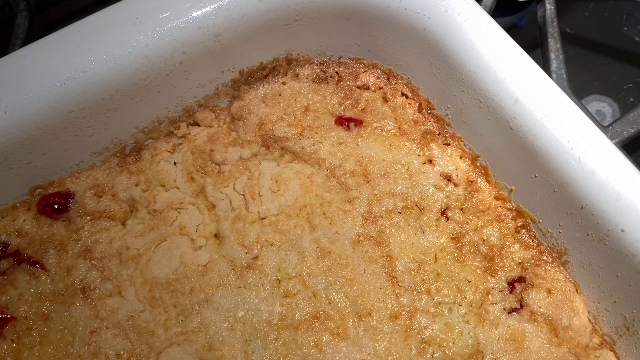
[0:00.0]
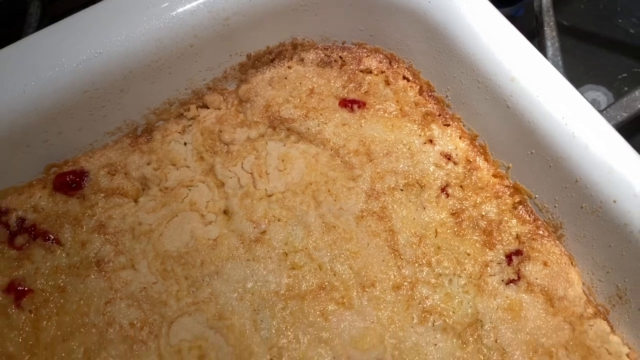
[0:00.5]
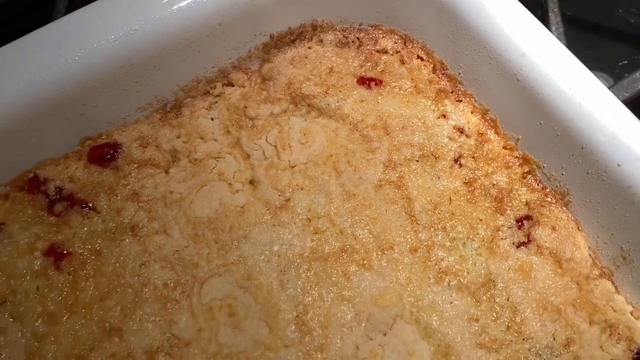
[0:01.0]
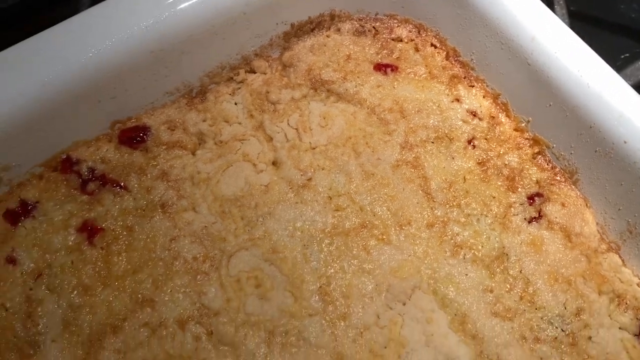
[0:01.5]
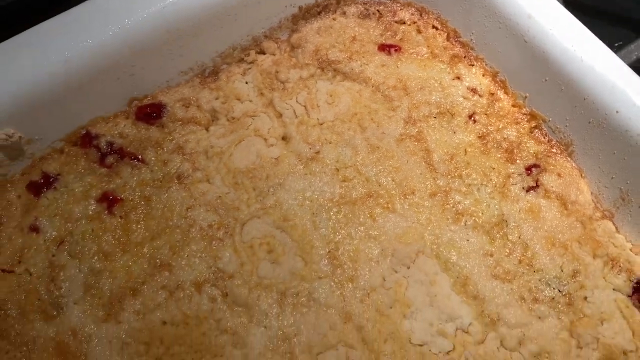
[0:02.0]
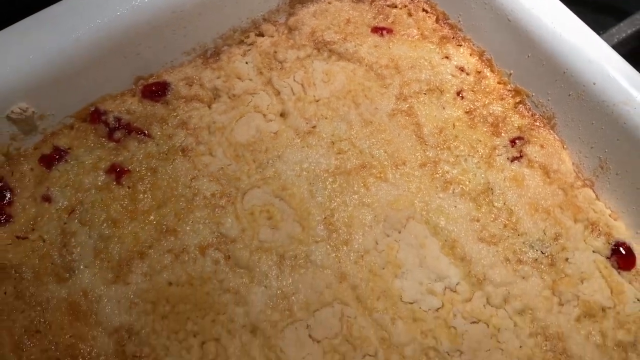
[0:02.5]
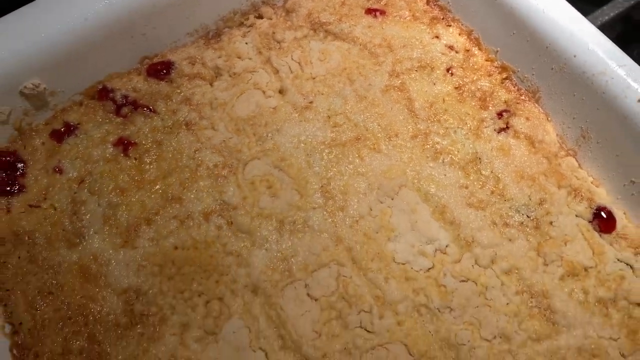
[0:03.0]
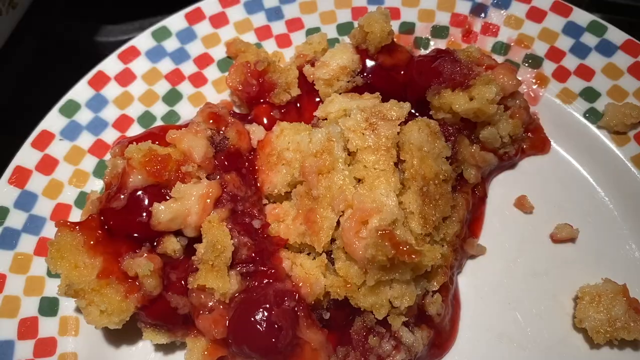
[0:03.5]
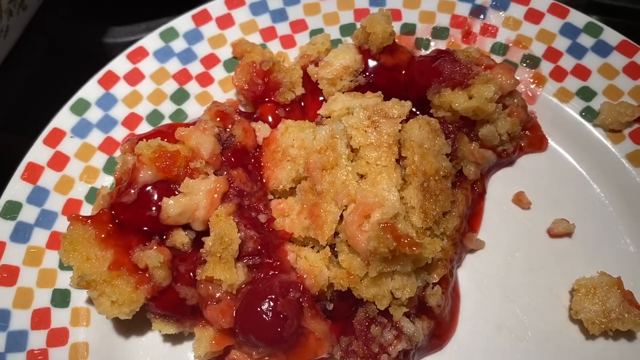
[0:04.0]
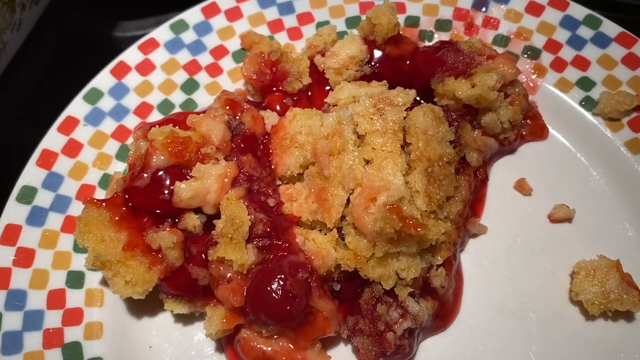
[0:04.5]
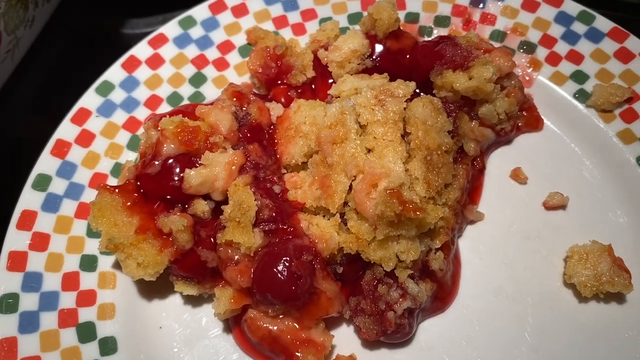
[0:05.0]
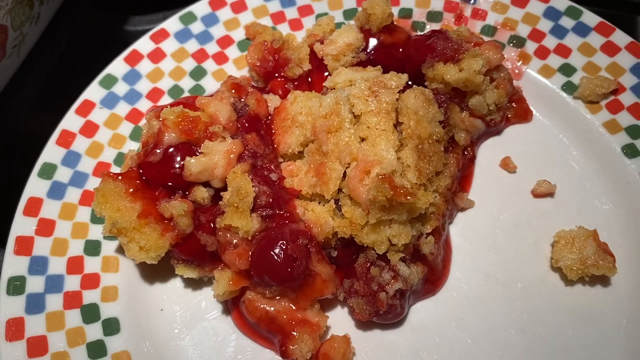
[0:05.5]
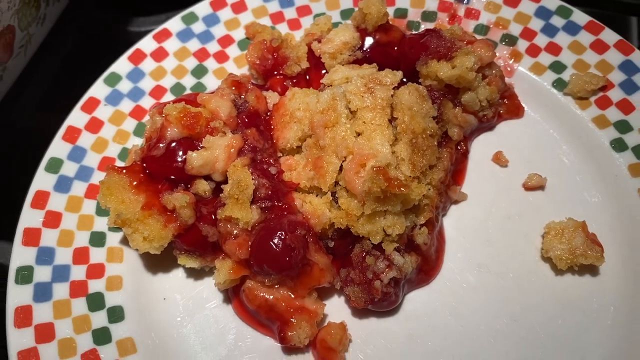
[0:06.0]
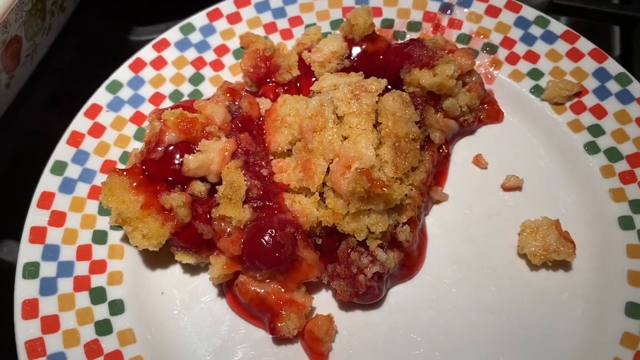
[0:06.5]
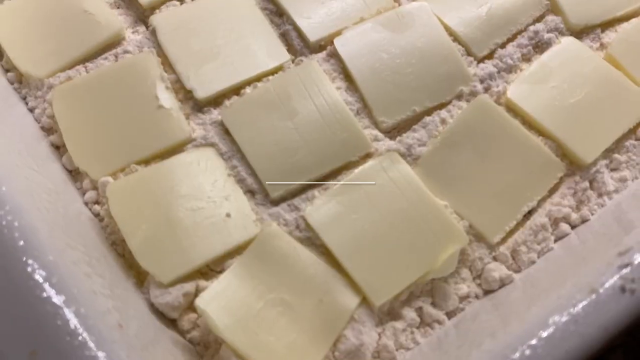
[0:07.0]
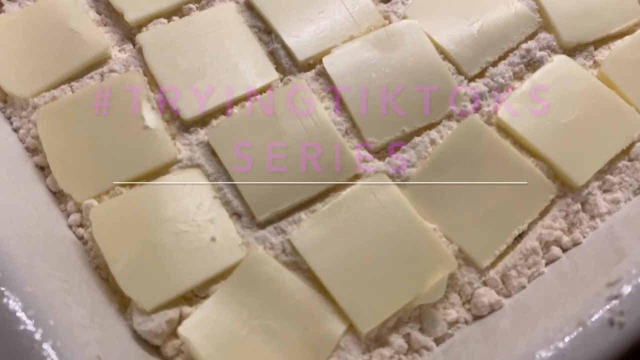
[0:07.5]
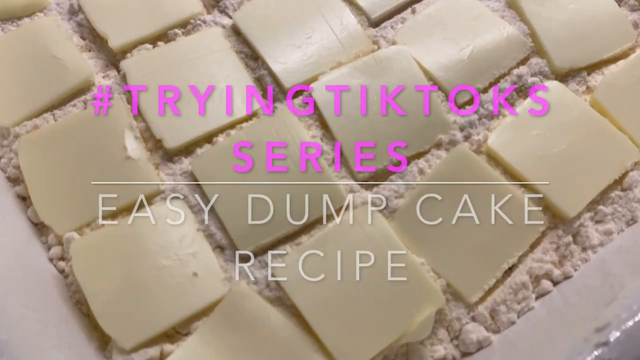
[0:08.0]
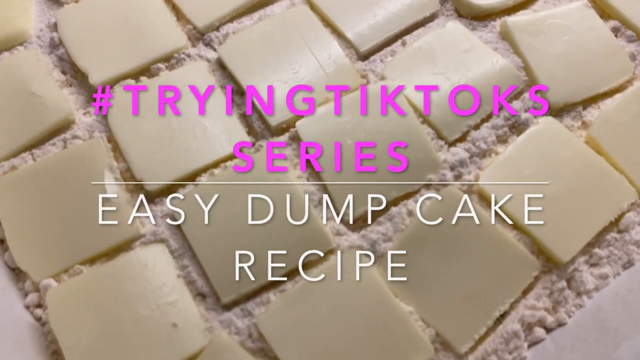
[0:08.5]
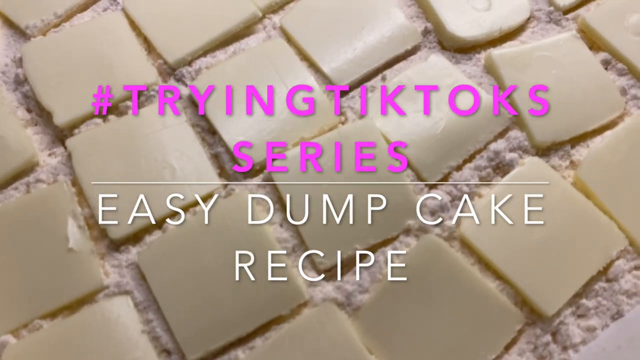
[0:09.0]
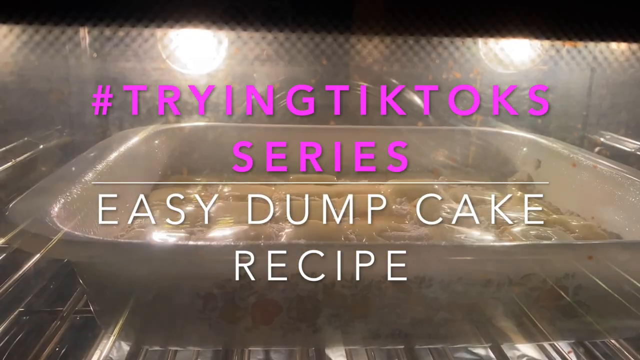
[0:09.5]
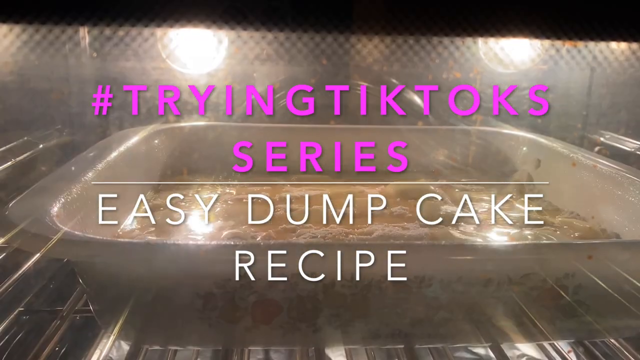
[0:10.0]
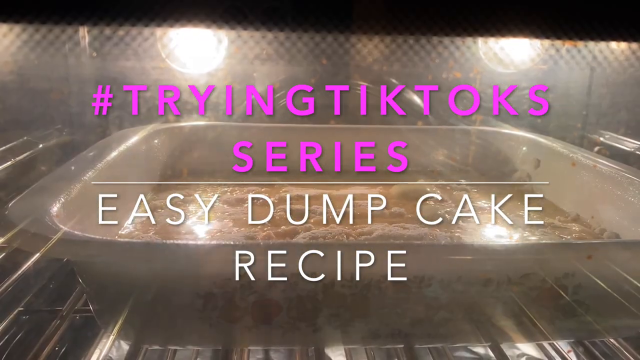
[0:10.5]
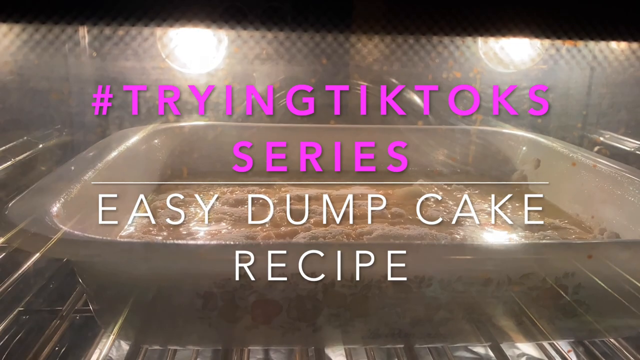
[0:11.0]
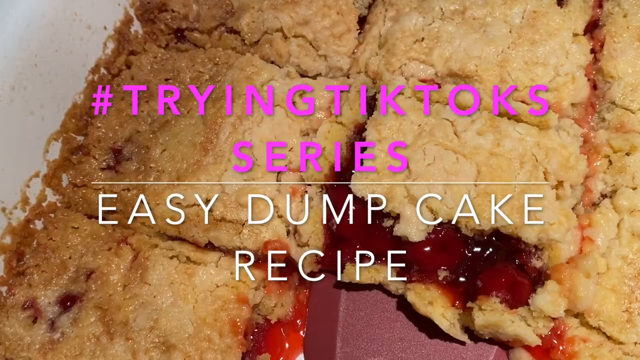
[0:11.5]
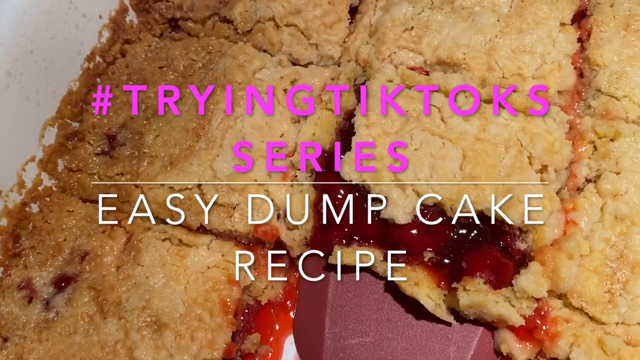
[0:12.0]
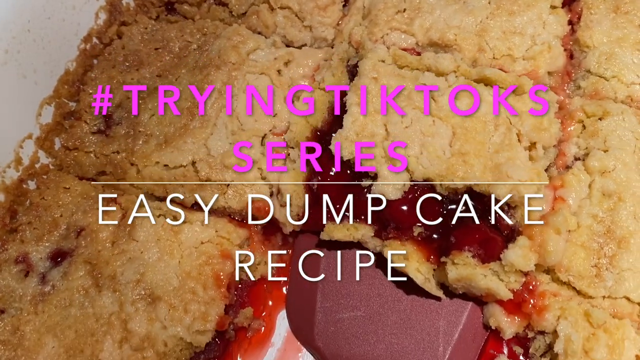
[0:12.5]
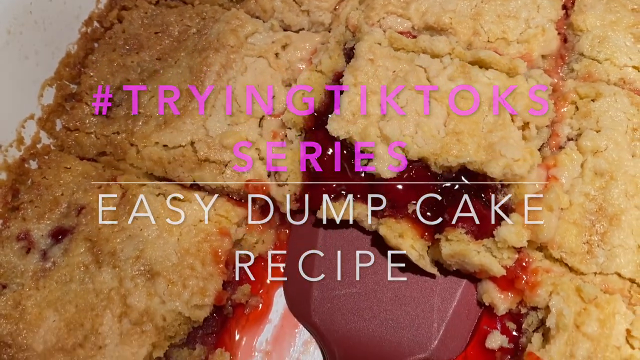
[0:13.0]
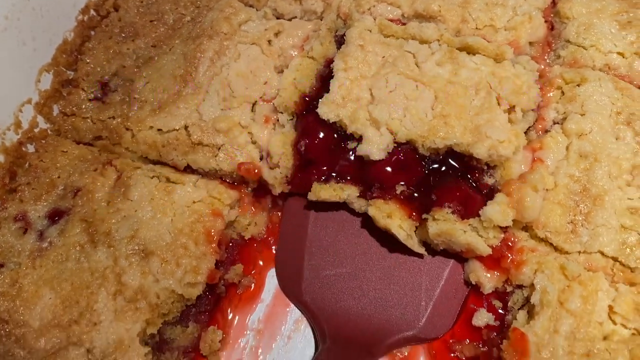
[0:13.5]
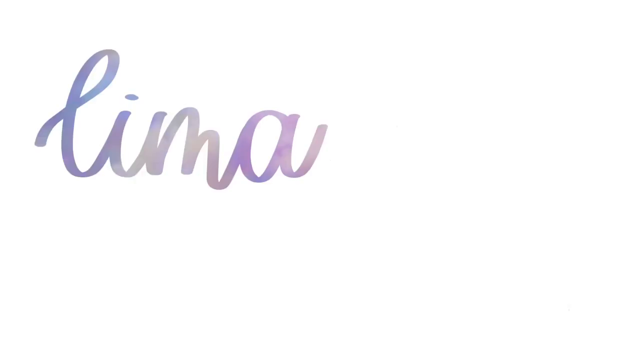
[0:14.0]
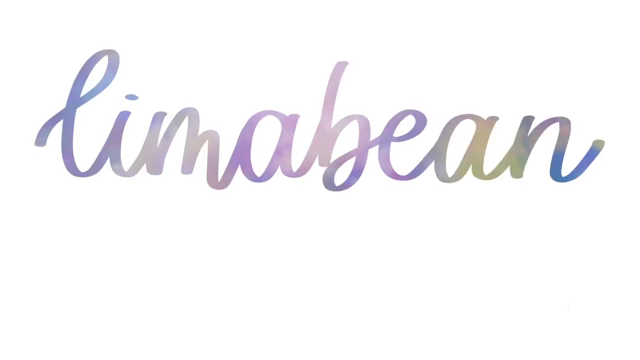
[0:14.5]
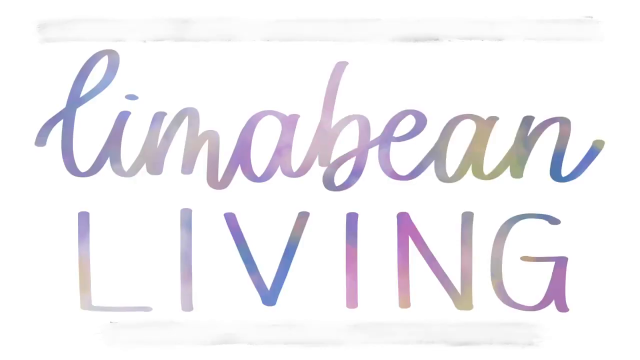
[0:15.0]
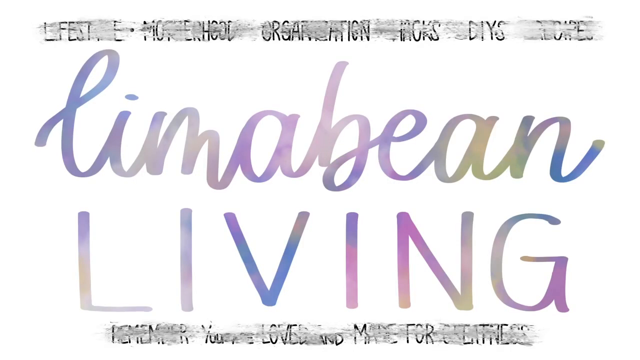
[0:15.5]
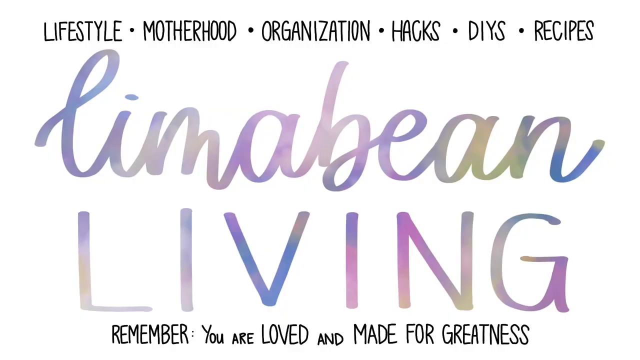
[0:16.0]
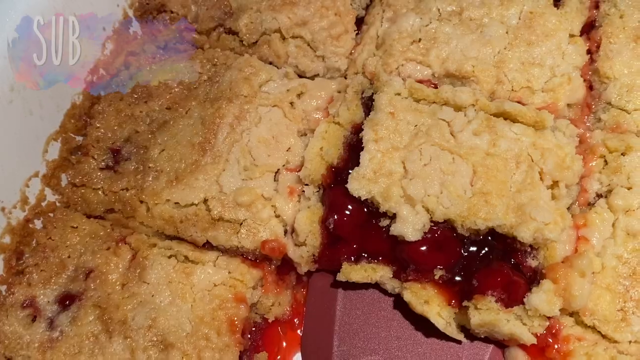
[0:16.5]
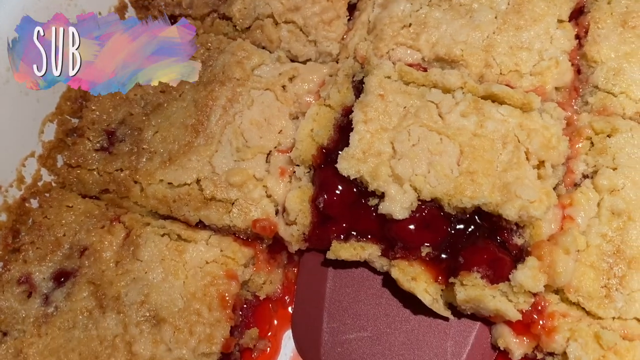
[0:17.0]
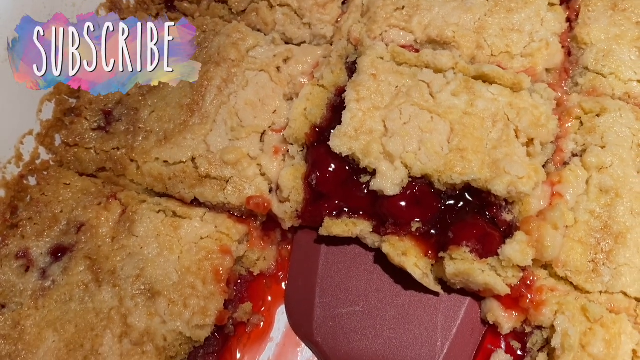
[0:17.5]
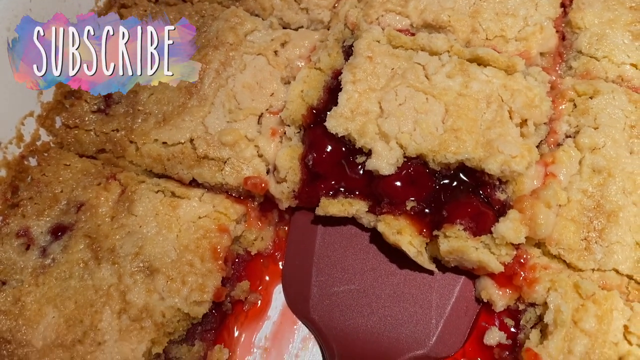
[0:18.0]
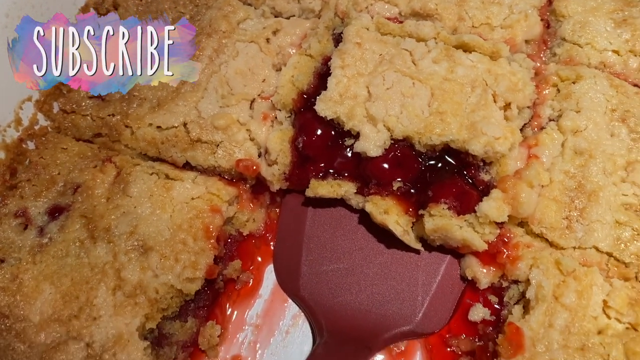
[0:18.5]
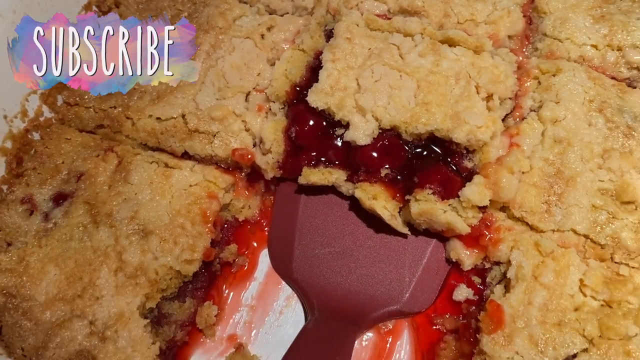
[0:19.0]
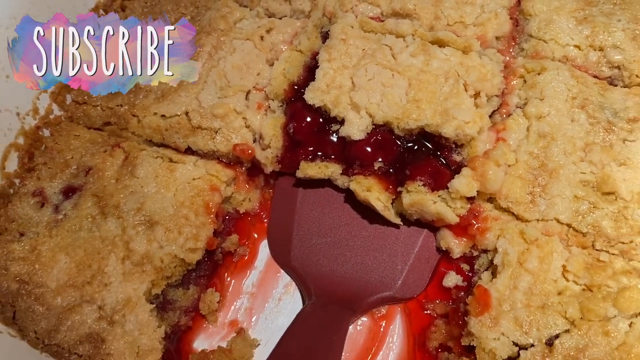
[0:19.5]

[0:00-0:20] A brown crust of freshly baked pastry is in a square white baking dish. The camera pans backwards slowly, revealing more of the crust, and little red droplets are still bubbling and oozing out through it. Next, a portion of the pastry is on a round, flat white plate decorated with colorful squares around the sides. The pastry has a red filling and a crumbly crust; it looks like a cherry pastry. Then the screen shows flour covered with square-cut slices of butter in the white baking dish. Text across the screen reads "#TryingTikTok's Series", and below it "easy dump cake recipe". Next, the white ceramic baking dish is in the oven with its contents bubbling. The finished pastry then appears with a square piece cut out of it, showing the red cherry filling inside. In the upper left corner of the screen, the word "subscribe" pops up.